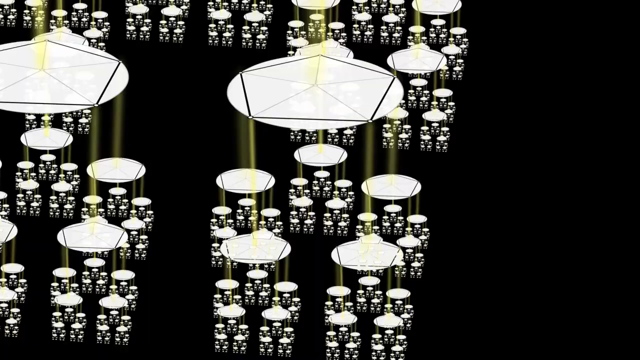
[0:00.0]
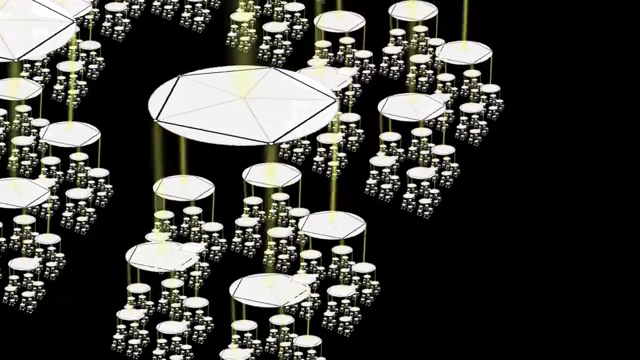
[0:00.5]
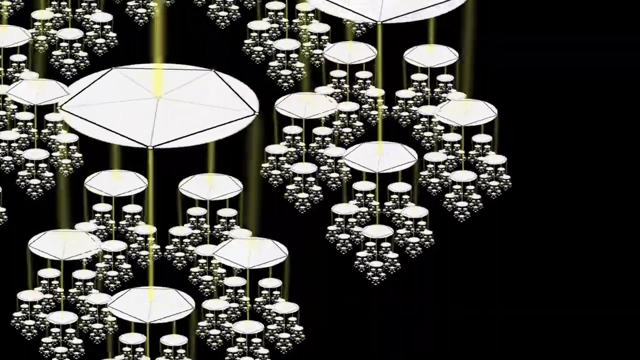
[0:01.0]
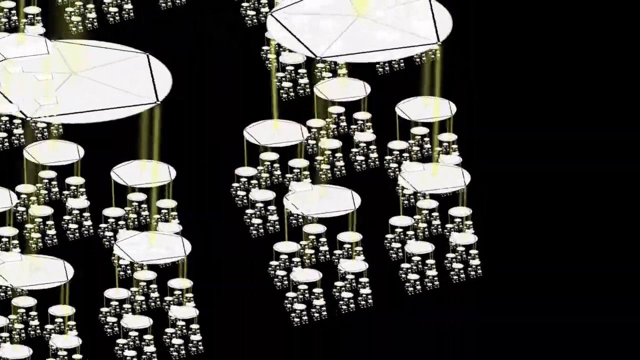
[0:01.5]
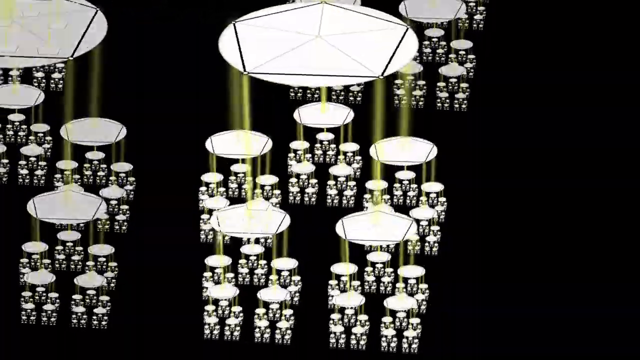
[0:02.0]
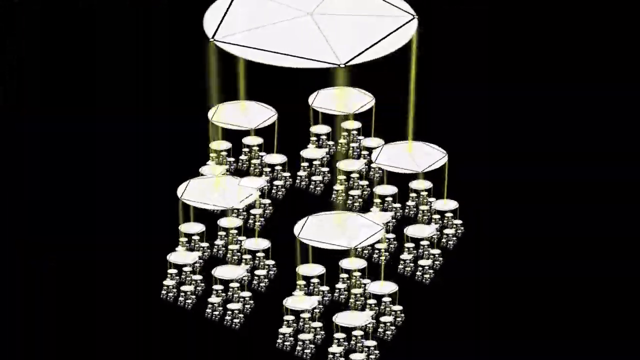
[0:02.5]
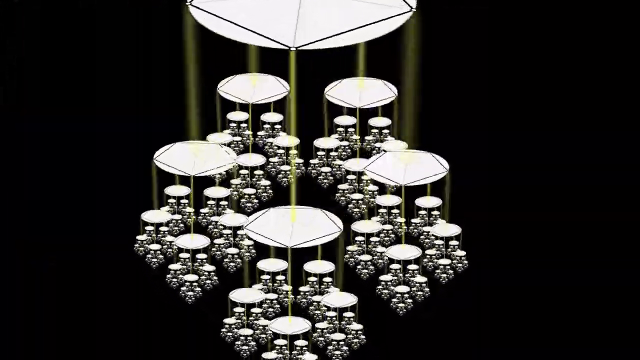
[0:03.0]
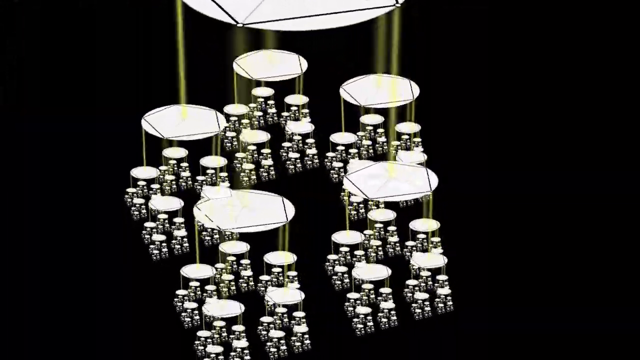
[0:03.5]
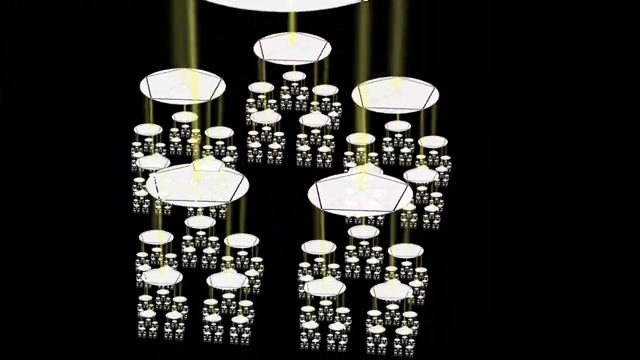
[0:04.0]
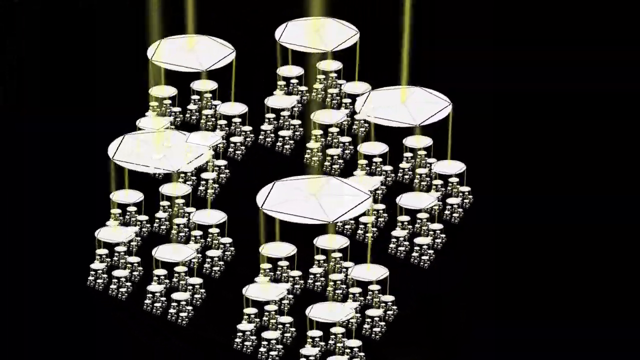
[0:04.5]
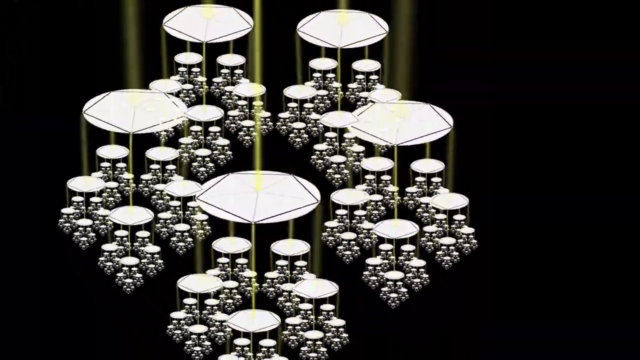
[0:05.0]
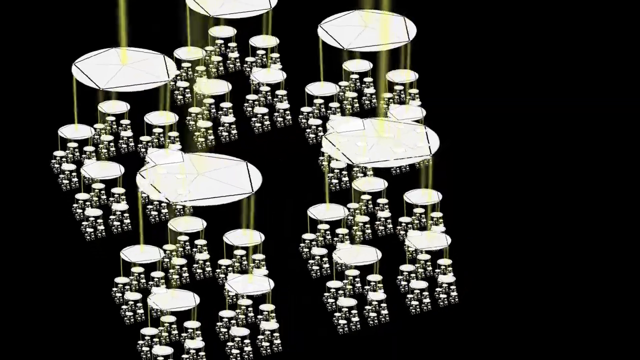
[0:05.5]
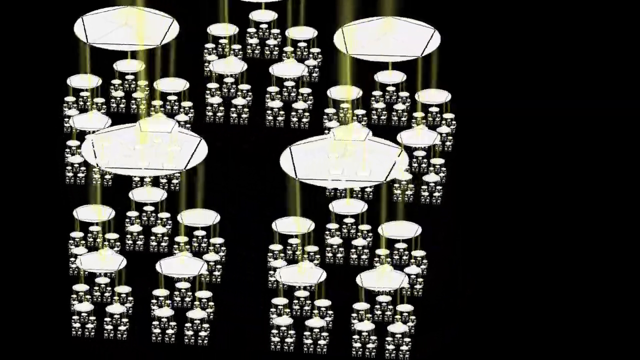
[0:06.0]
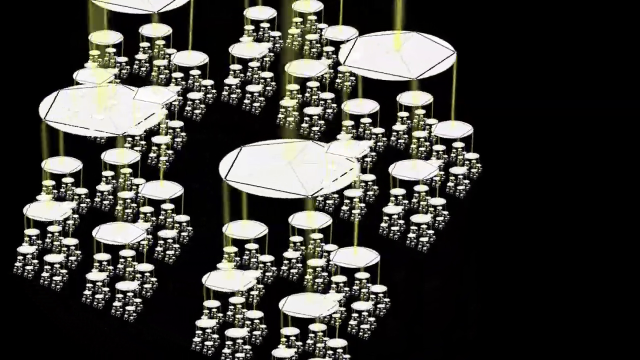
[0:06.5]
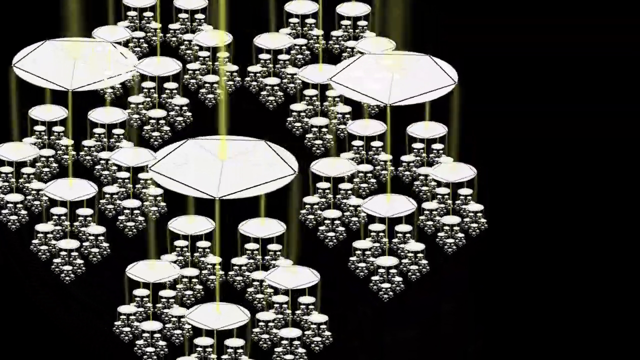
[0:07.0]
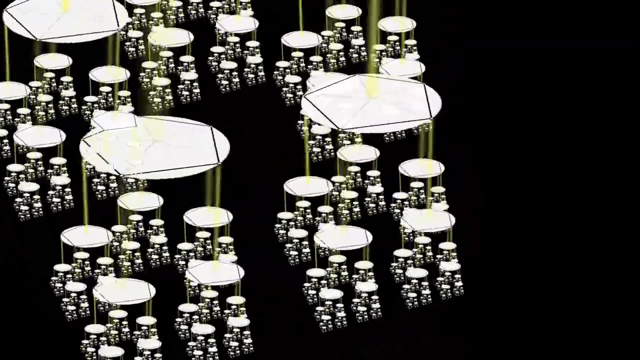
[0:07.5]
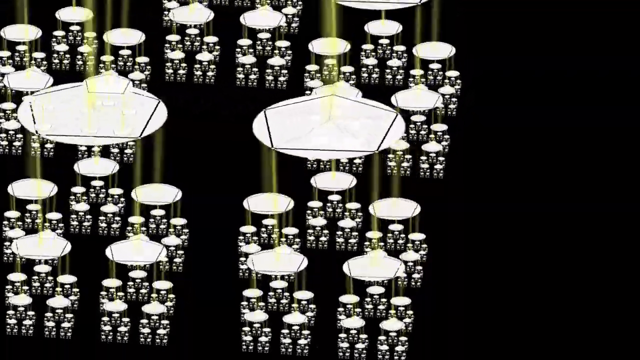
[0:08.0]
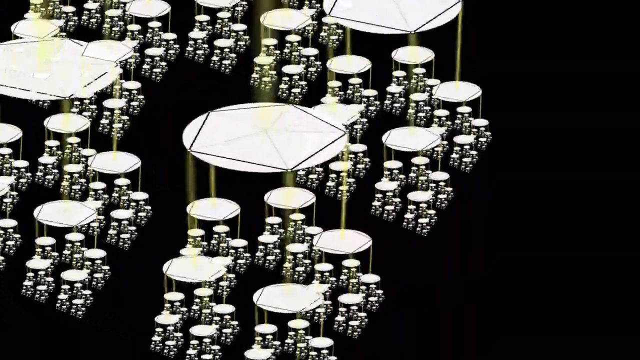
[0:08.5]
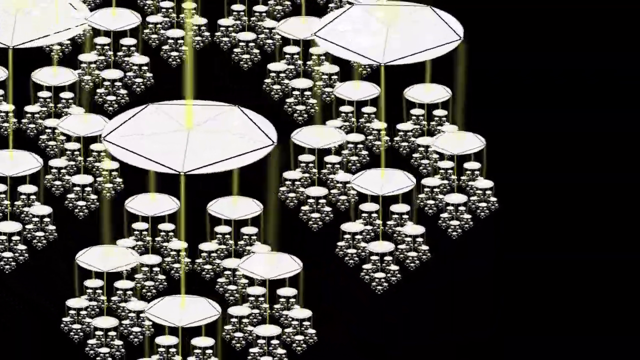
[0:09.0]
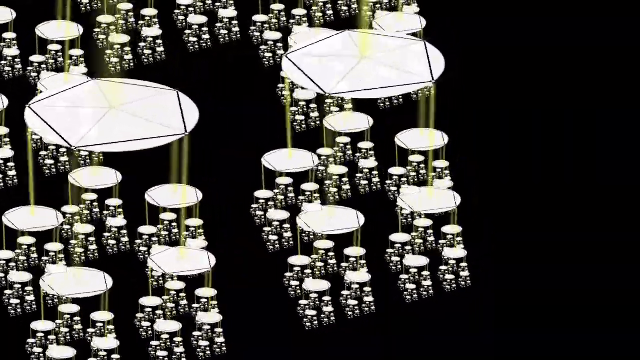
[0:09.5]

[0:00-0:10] Against an empty black background are several large white discs, each with a black pentagram shape in the middle. From each point of the pentagram on every white disc, a yellow beam of light descends onto a smaller white disc that also bears a pentagram shape. The white discs rotate clockwise in the empty black space. The view focuses on one of the white discs and the five white discs beneath it, then zooms in to focus on those five discs and the five white discs beneath each of them, which are spinning clockwise. It zooms in further to focus on a still smaller white disc.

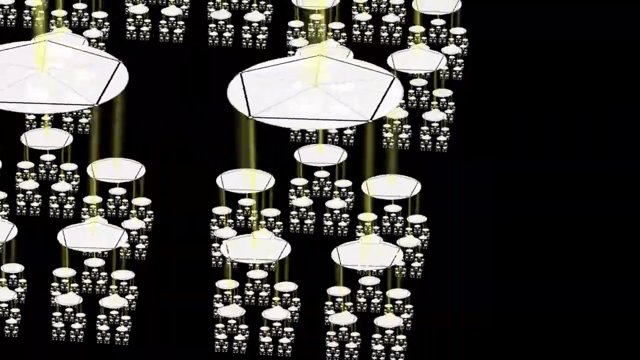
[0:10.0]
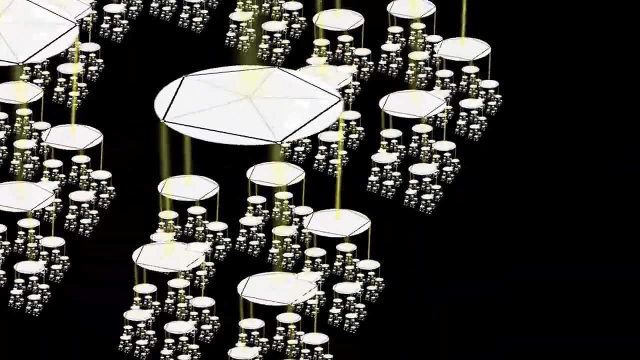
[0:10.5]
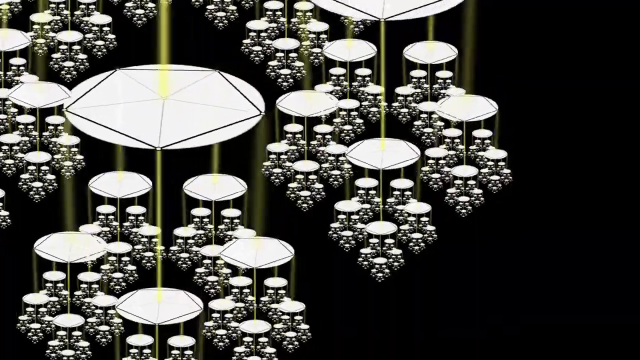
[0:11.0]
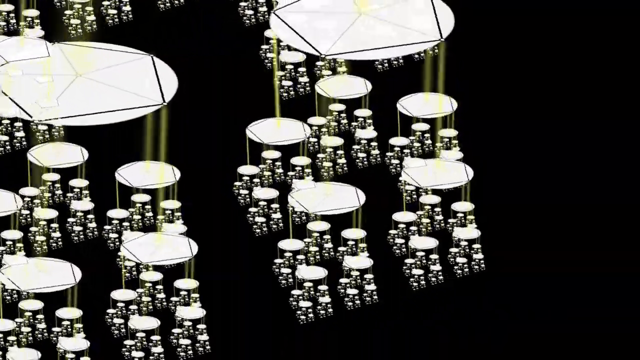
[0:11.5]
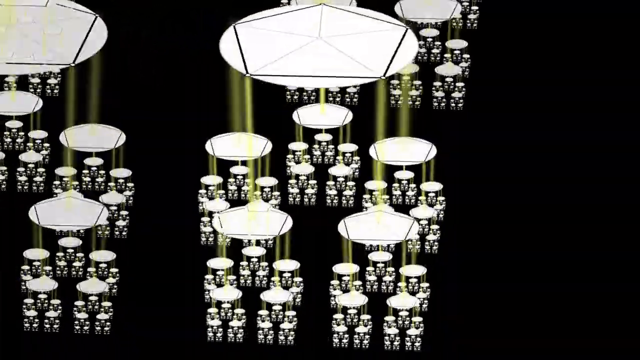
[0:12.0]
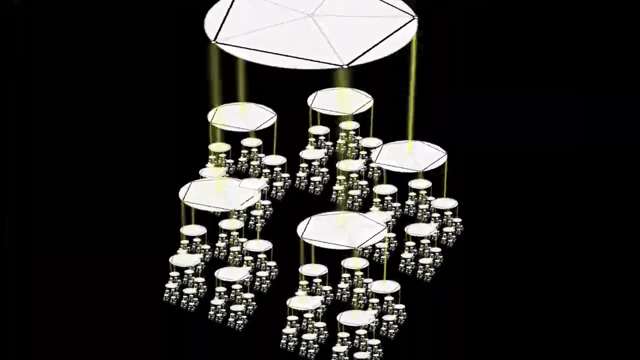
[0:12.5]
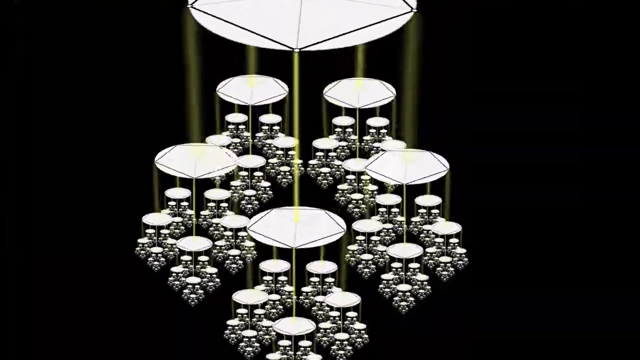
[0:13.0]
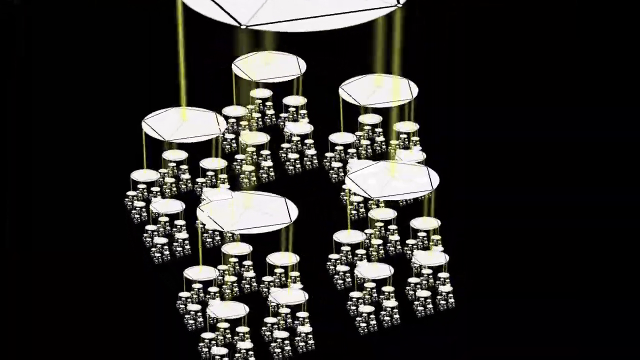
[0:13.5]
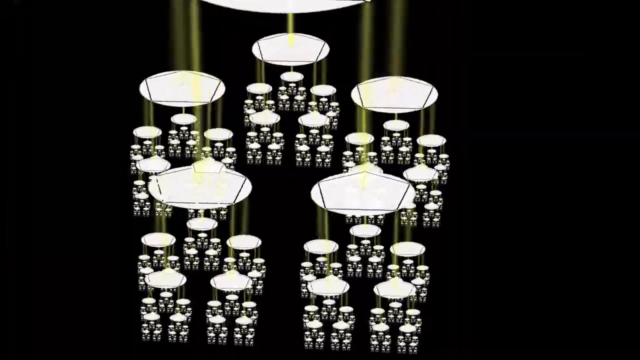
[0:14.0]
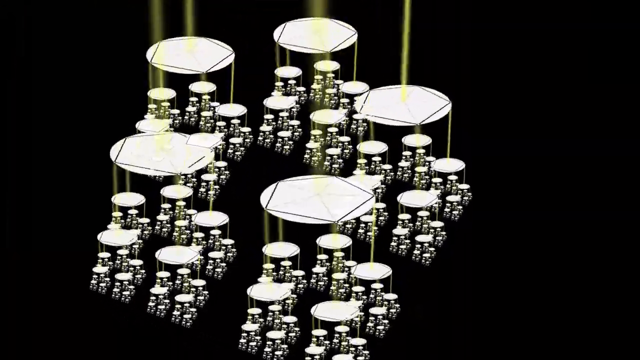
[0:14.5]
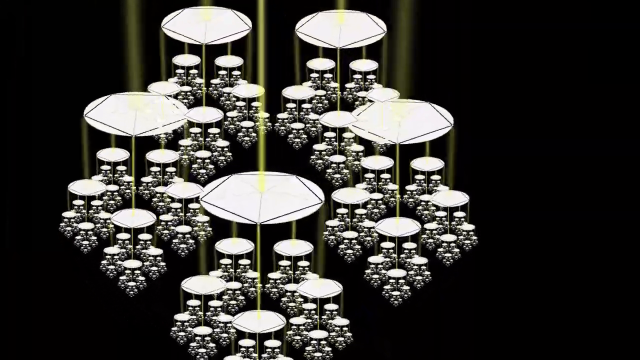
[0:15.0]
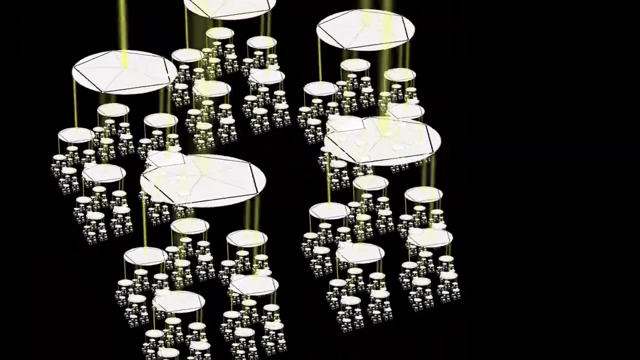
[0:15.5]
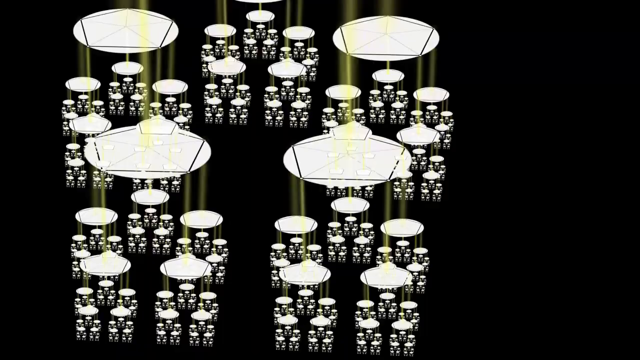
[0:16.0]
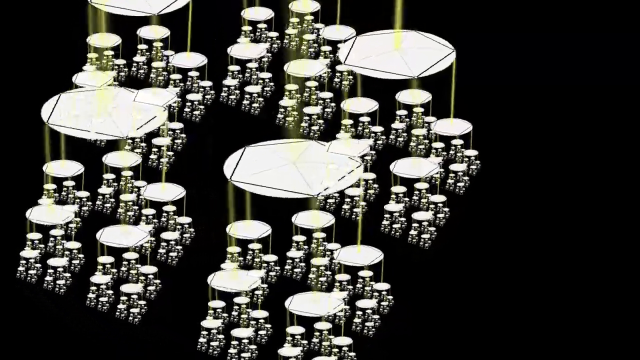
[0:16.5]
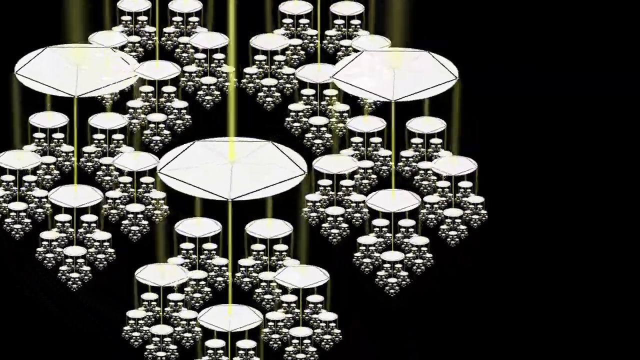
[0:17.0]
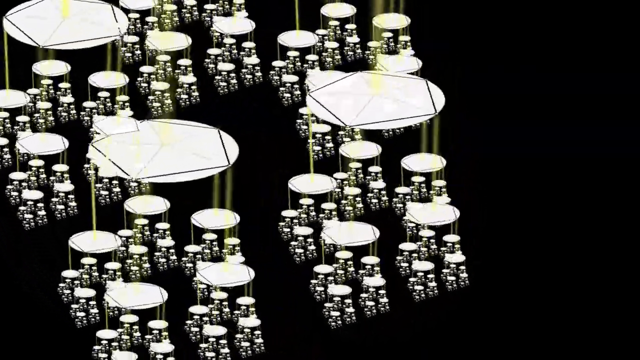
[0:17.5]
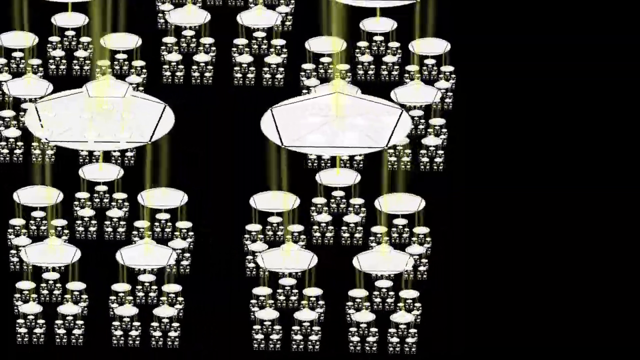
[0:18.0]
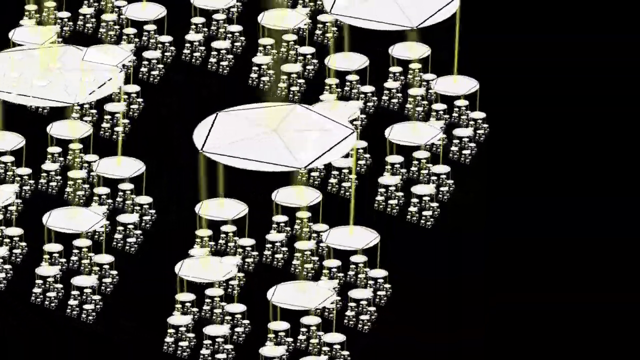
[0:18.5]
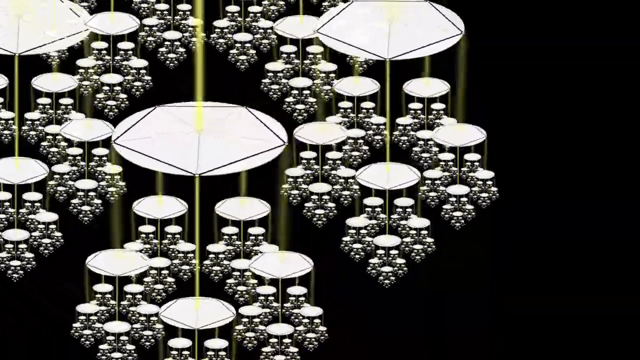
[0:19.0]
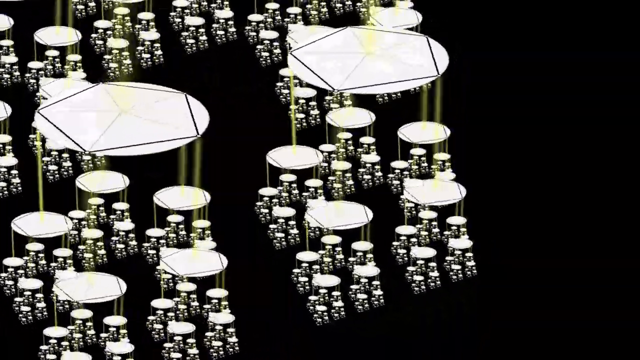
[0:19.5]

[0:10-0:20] Inside an empty black background are white discs with a black pentagon shape on them. From each of the five points of the black pentagon on a white disc, a yellow beam of light descends onto another, smaller white disc. All of the white discs spin clockwise. The view focuses on the five largest white discs, each of which descends into five smaller white discs, then pans and zooms in to focus on the 25 second-largest white discs and the five smaller white discs beneath each of them. It zooms in further, focusing on smaller and smaller sets of white discs until it is focused on the smallest visible white disc set against the empty black background.